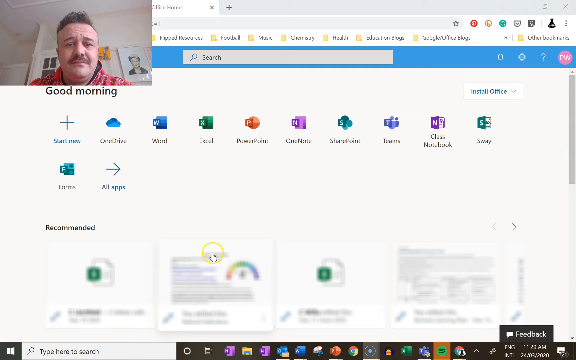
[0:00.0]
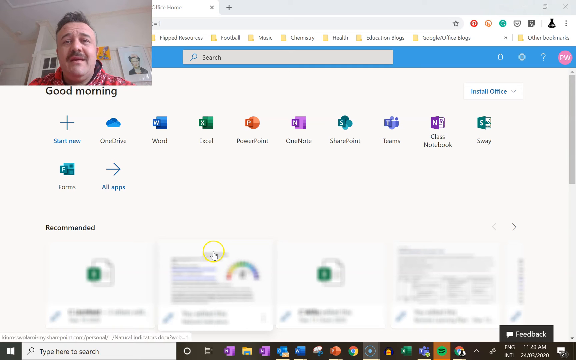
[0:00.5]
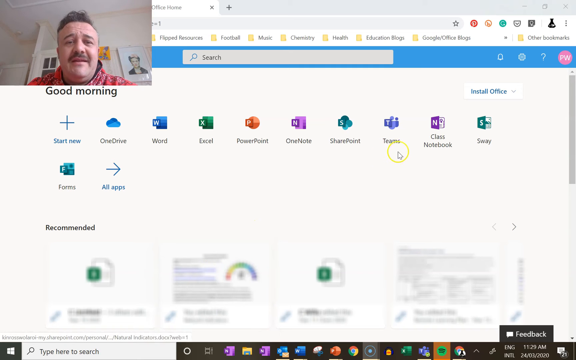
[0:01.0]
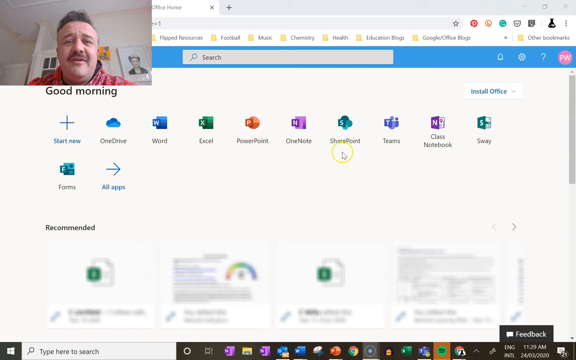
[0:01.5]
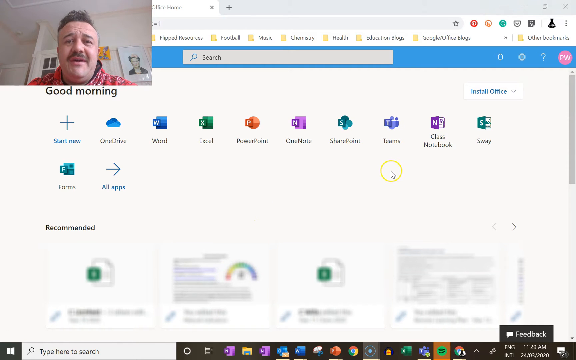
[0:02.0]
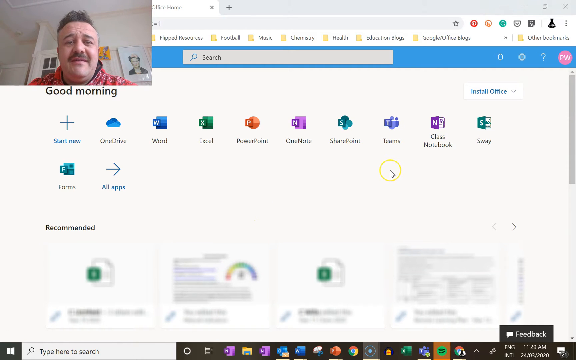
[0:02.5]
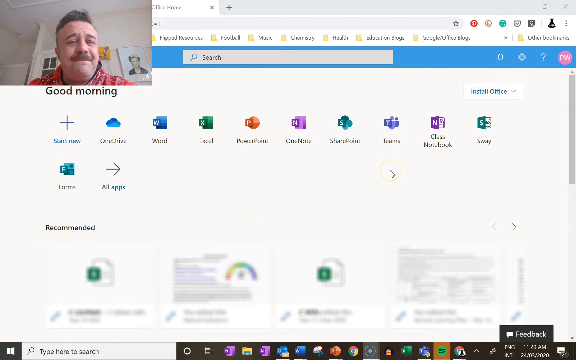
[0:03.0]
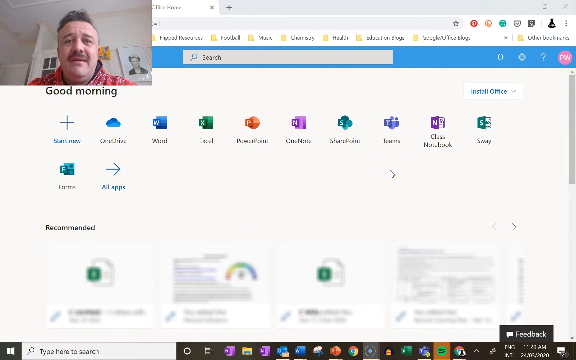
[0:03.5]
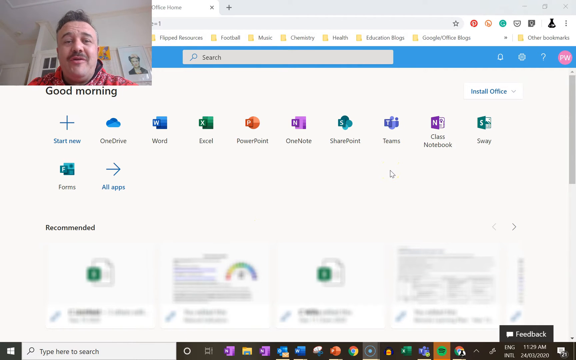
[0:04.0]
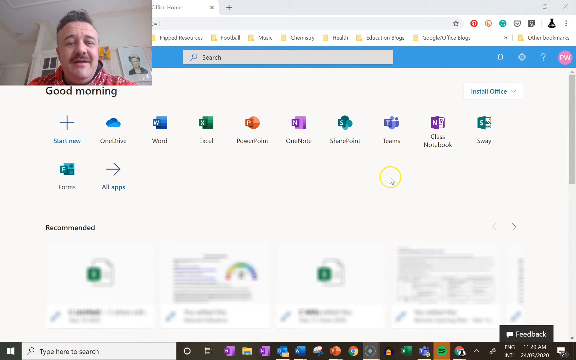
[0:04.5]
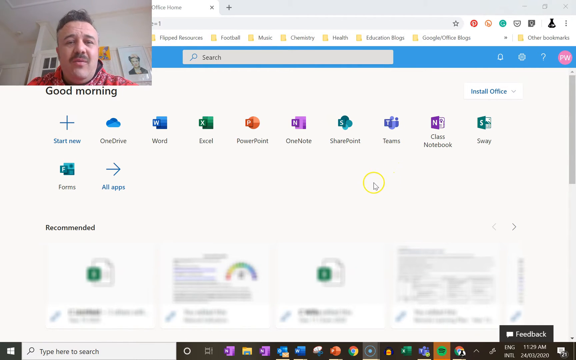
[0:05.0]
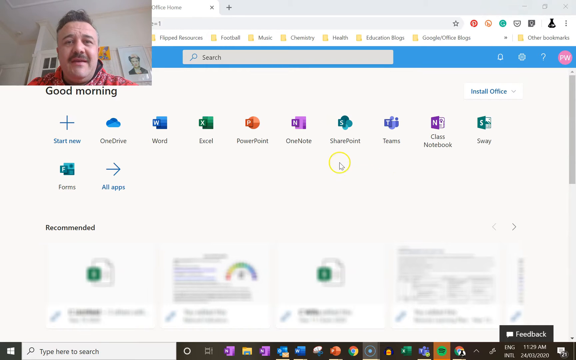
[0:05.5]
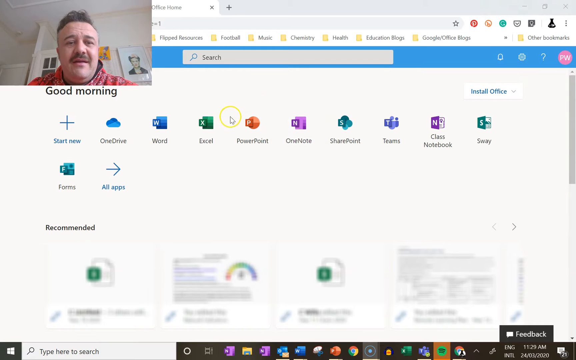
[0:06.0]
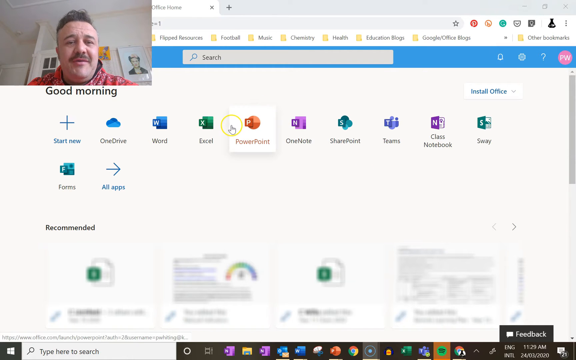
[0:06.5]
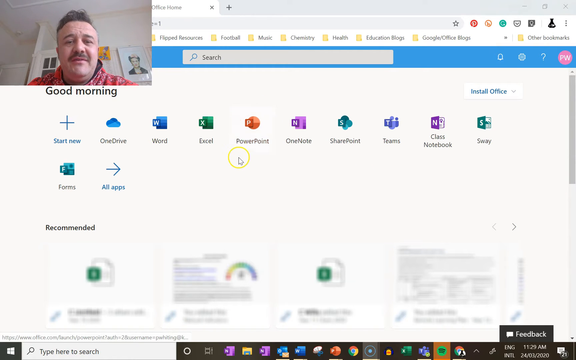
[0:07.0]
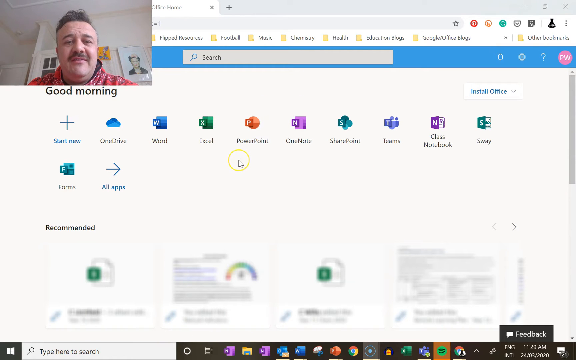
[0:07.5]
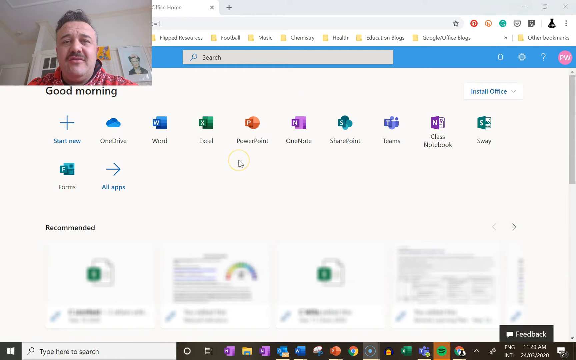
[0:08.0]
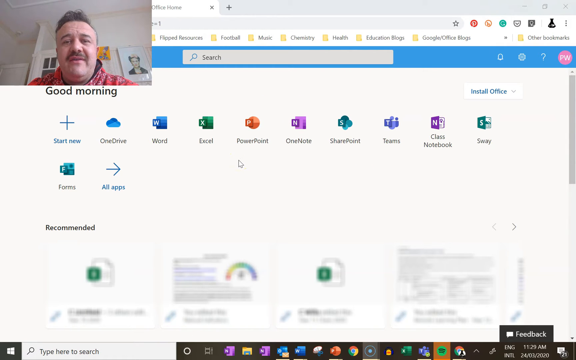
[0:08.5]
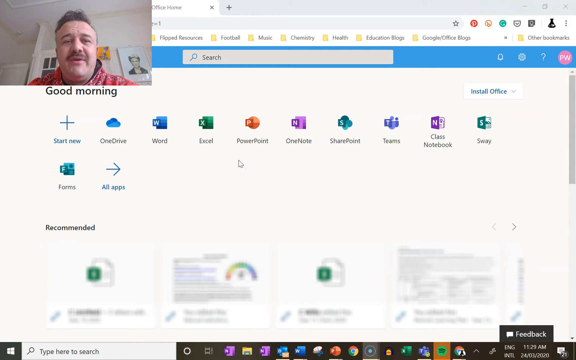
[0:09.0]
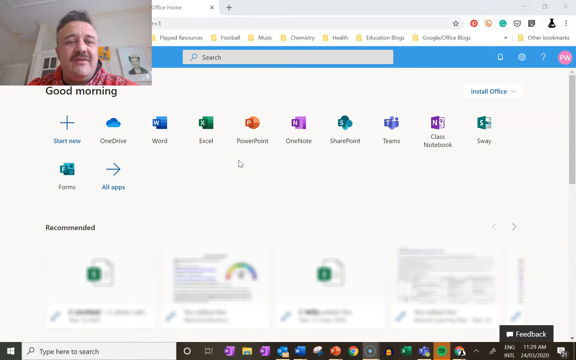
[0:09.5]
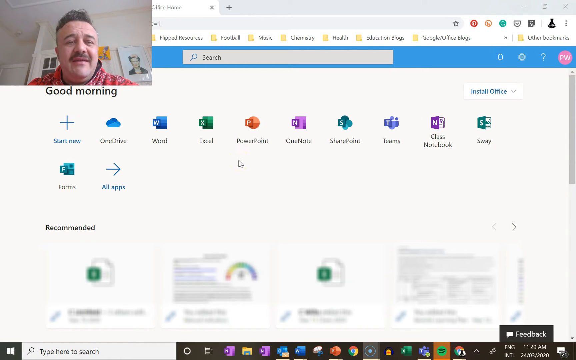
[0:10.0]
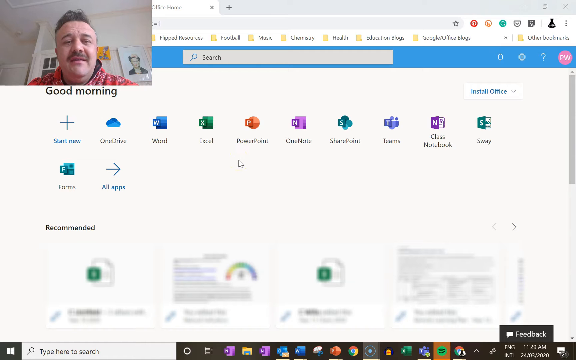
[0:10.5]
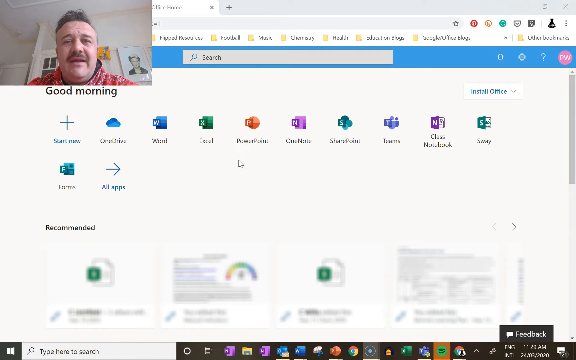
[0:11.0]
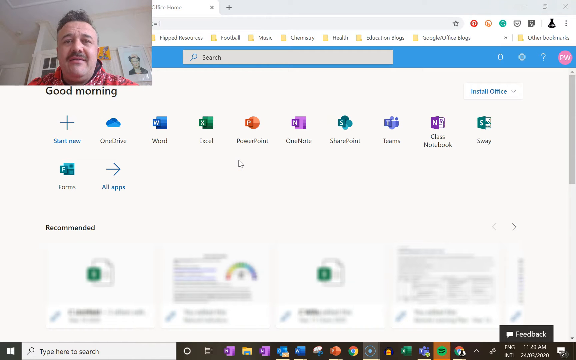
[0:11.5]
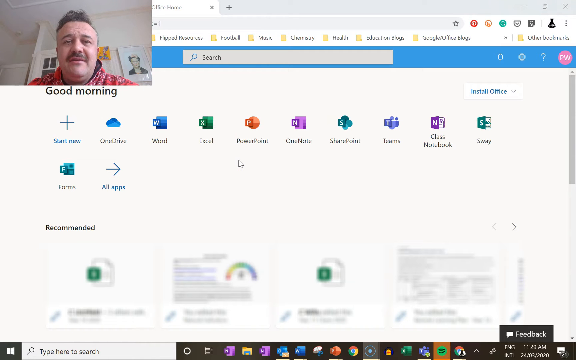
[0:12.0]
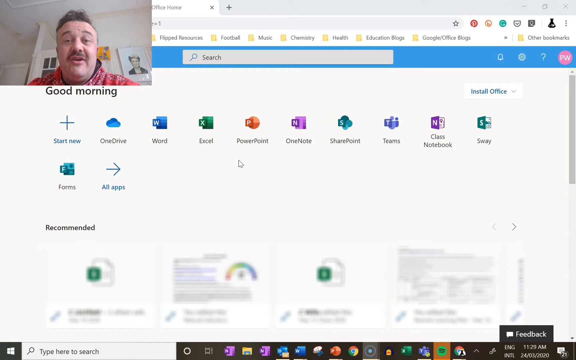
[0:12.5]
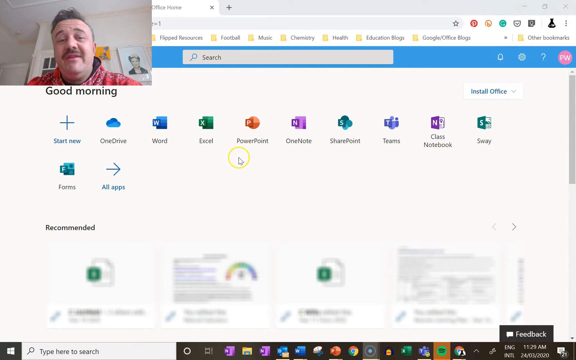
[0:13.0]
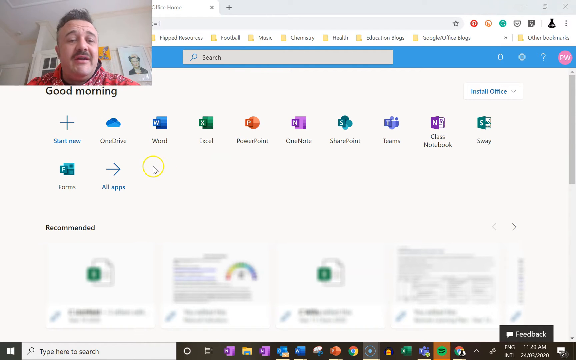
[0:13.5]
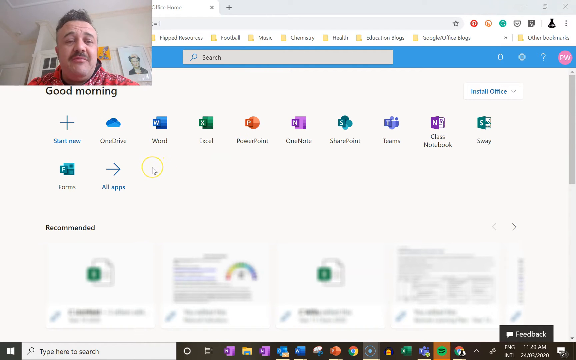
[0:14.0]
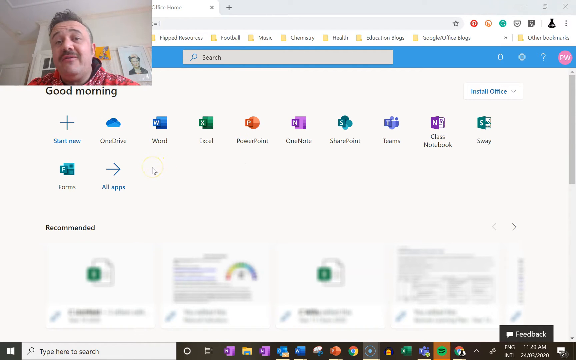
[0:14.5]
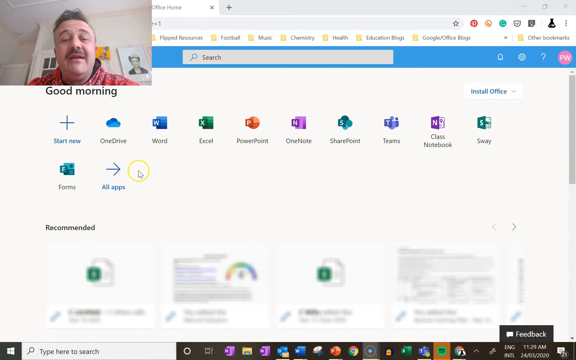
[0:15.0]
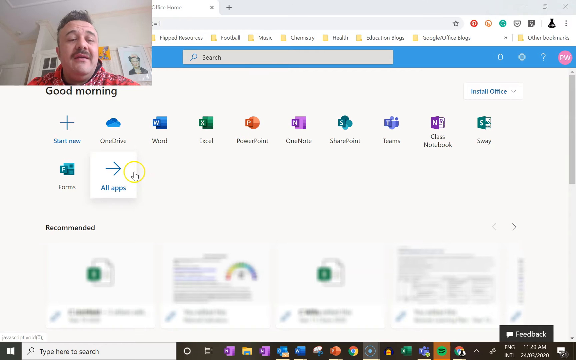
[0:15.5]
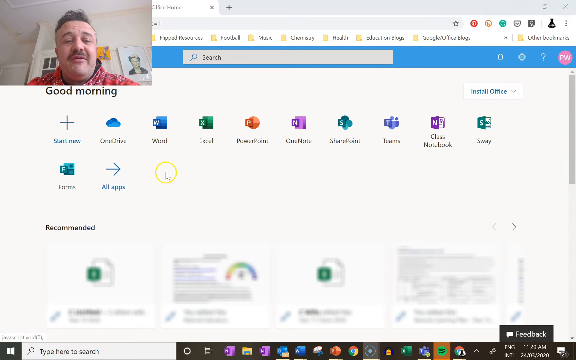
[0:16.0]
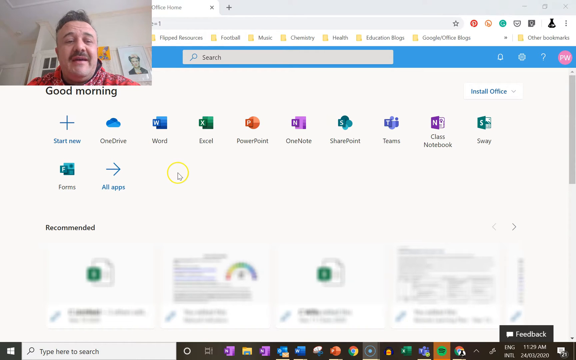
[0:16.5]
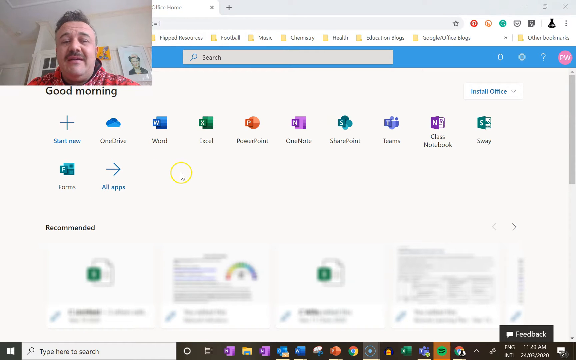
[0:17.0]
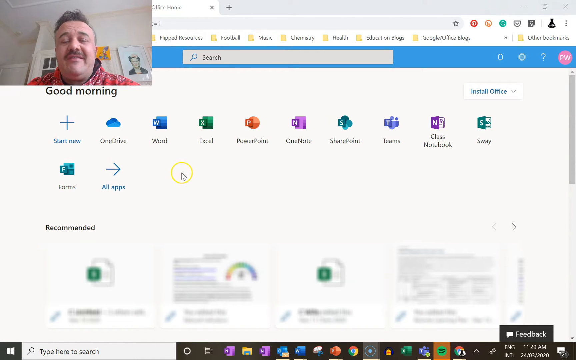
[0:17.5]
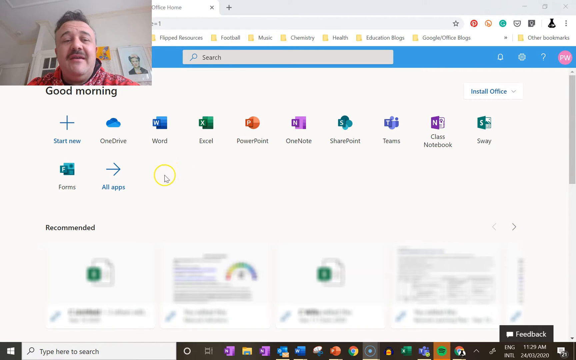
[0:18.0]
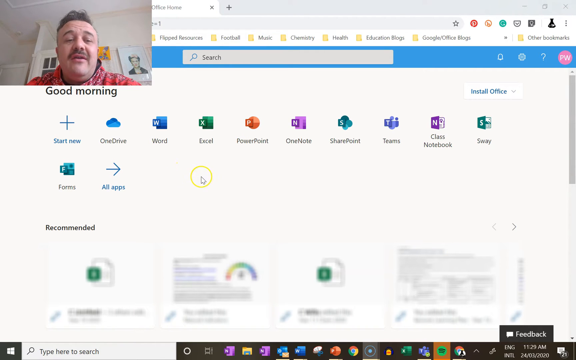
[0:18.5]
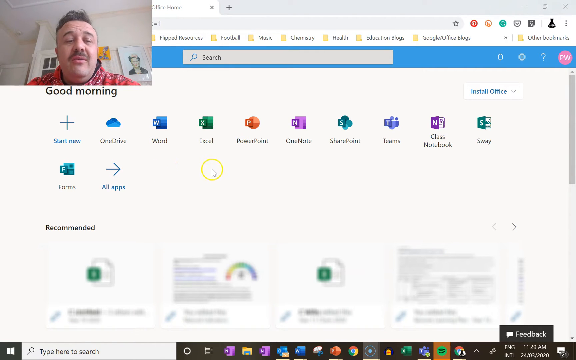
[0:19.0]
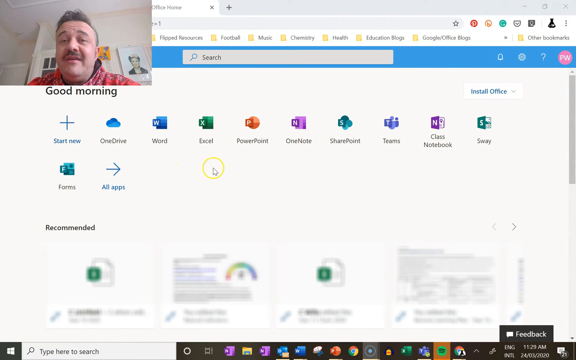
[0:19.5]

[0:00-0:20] A man is vlogging, with his picture in the upper left corner while he shares his screen to teach how to use technology. He has brown hair that is kind of spiked up on top and a brown mustache, and he wears a plaid red shirt. Behind him is a white wall with a couple of pictures on it and a white door with glass in a couple of areas. The shared screen says "good morning" and shows various icons: a plus labeled "start new", a cloud labeled "OneDrive", a W near paper labeled "Word", then Excel, PowerPoint, OneNote, SharePoint, Teams, Class Notebook, Sway, one labeled "forms", and "all apps". As the video goes on, he uses a yellow circle containing a white arrow or white pointed hand to show what he is going to click on, moving it around while he talks. He moves it down toward the bottom to a recommended section, where it stops at the second picture.